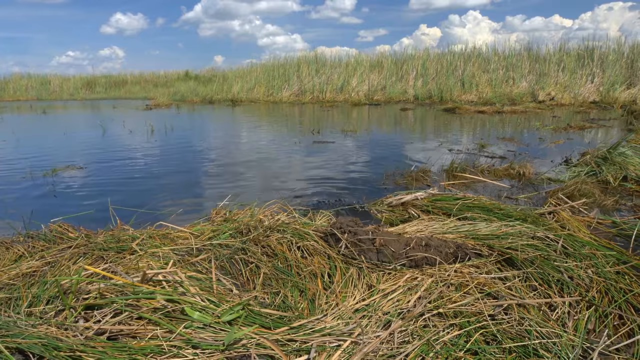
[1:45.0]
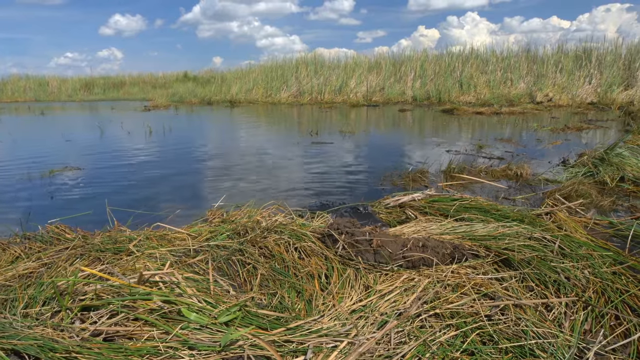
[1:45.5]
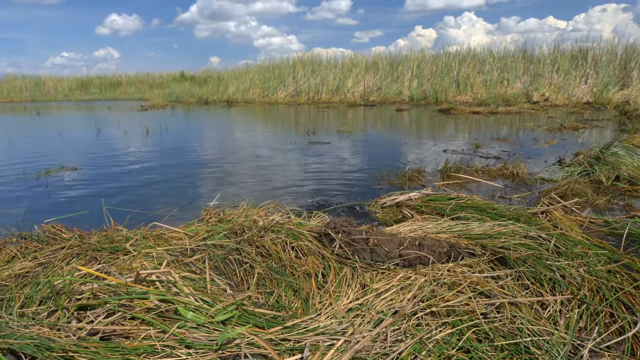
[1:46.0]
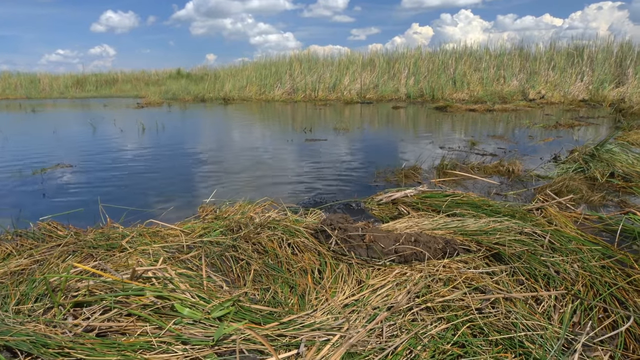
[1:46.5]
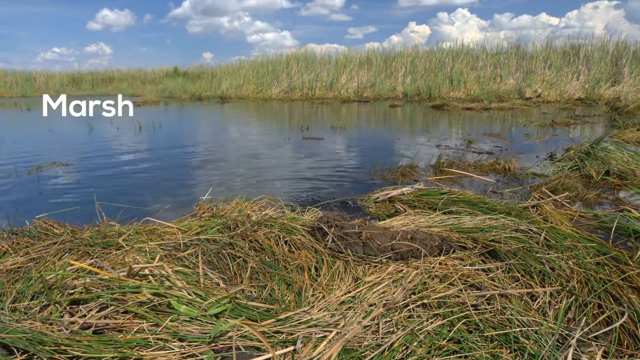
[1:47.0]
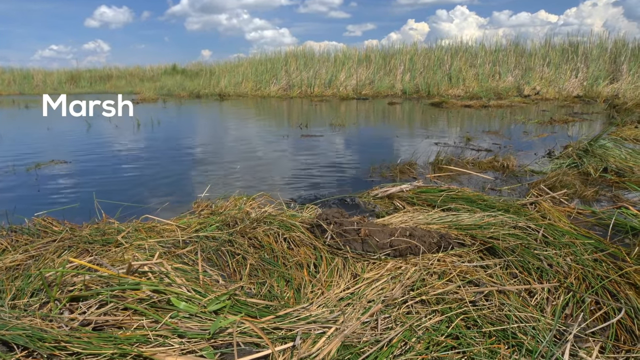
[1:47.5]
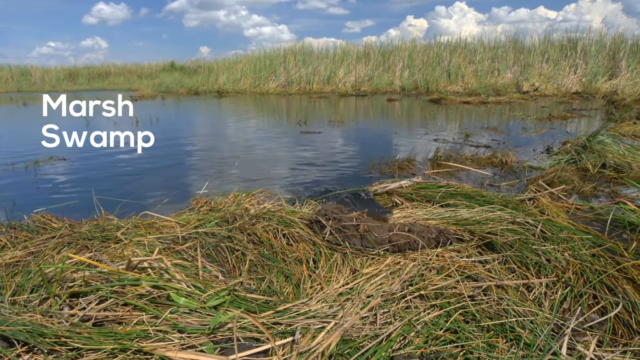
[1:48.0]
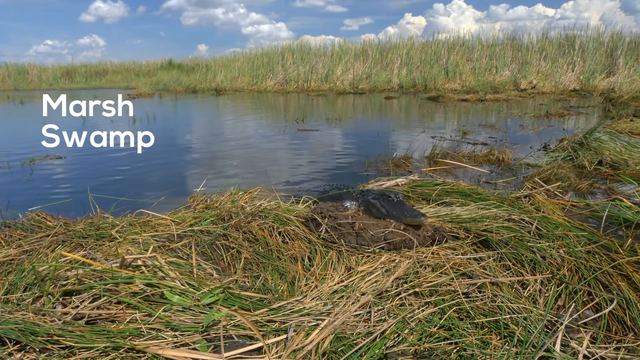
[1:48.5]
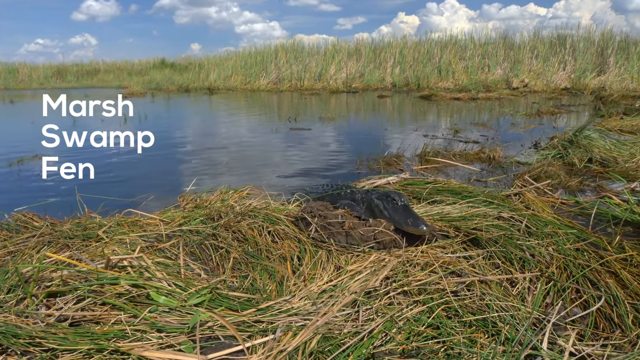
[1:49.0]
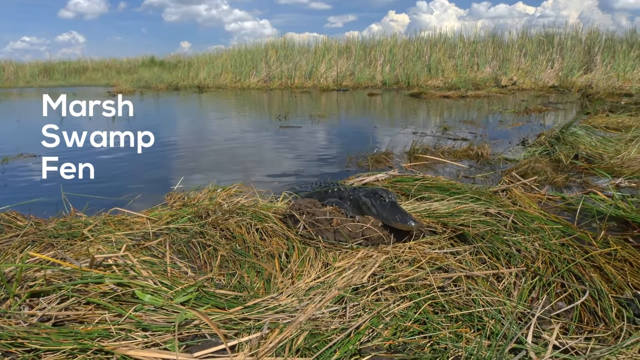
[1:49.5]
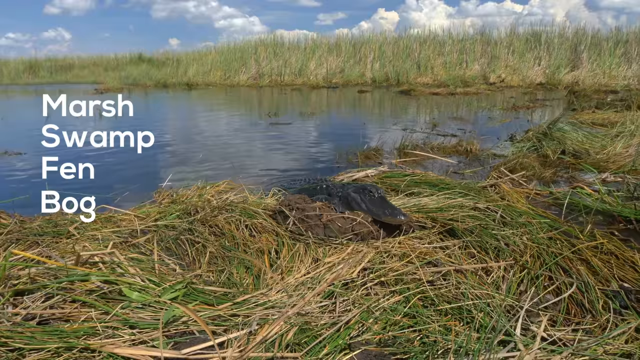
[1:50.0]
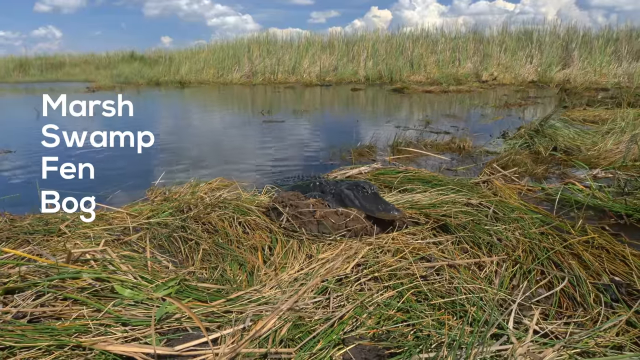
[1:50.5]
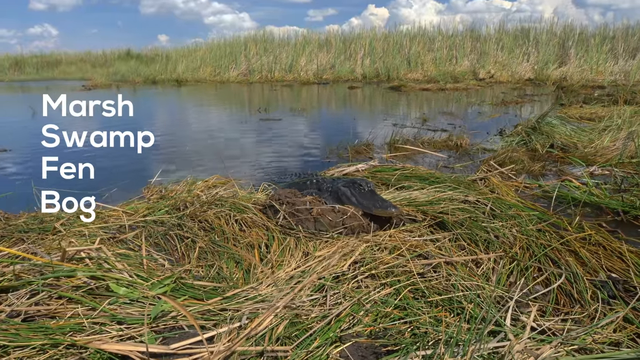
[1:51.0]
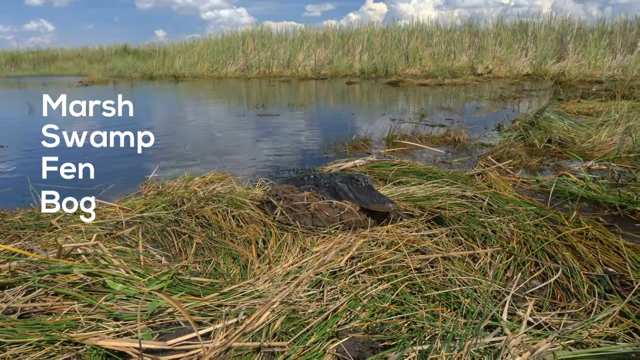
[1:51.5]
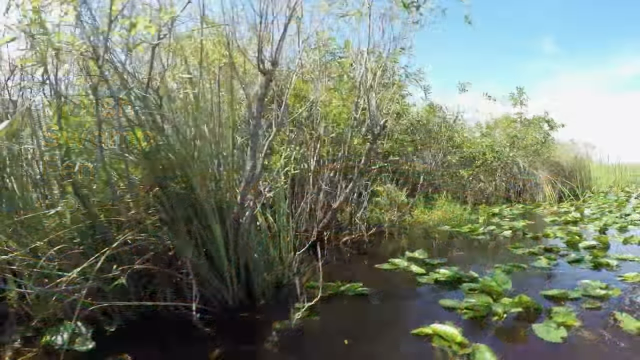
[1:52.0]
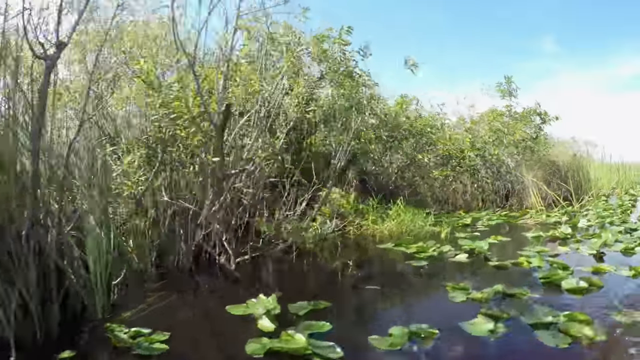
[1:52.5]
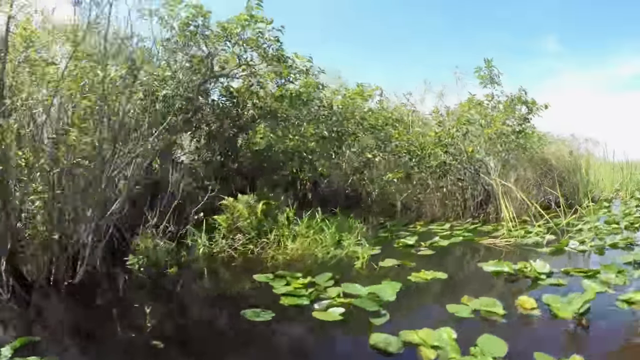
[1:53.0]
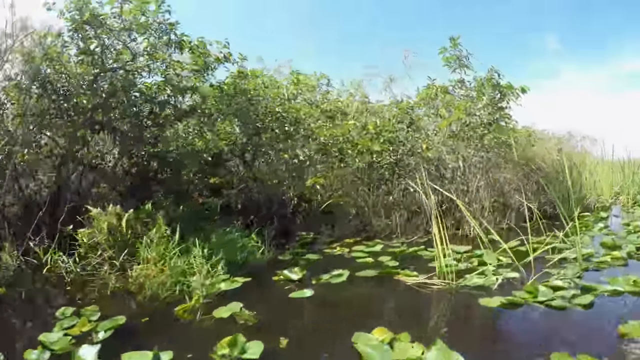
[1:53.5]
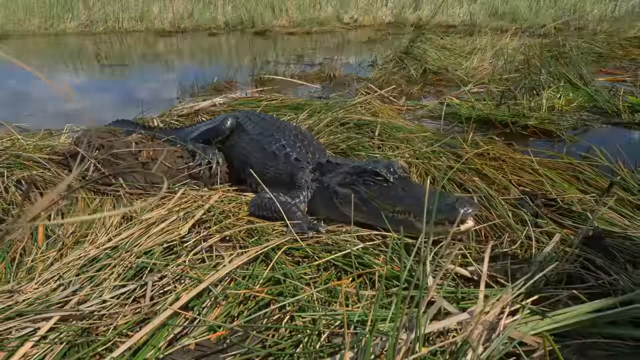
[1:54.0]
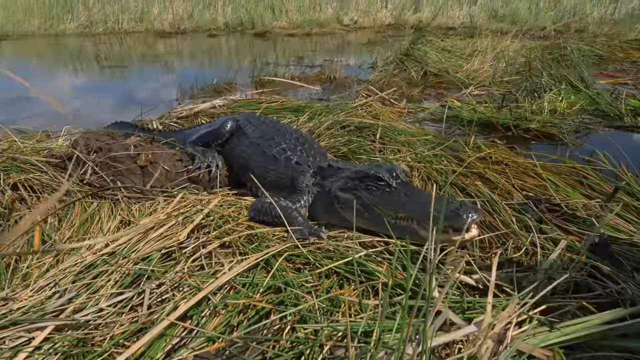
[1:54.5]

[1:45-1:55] What appears to be a marshy area of the marsh, swamp, fen and bog type is shown. A crocodile or alligator crawls out of the water into the long marshy grass in bright sunshine. The sky is very blue with big puffy clouds. Part of the marsh has grasses padded down, probably where the animal often comes to sun itself. Many lily-pad-like plants grow along the shores, and bushy trees grow at the water's edge, with a portion of their leaves missing, maybe eaten by marsh wildlife.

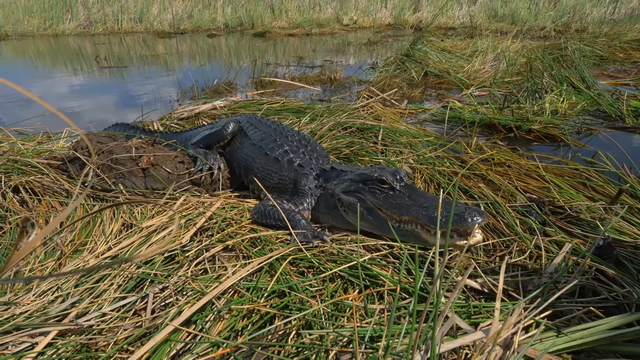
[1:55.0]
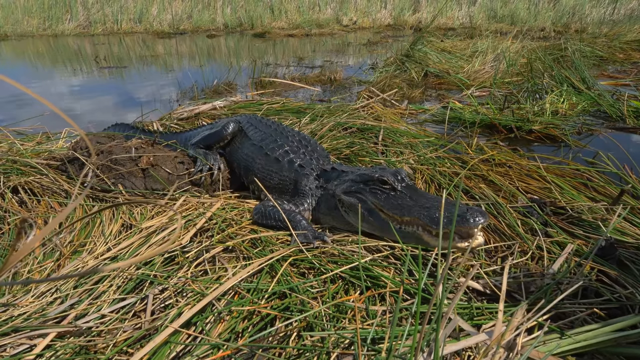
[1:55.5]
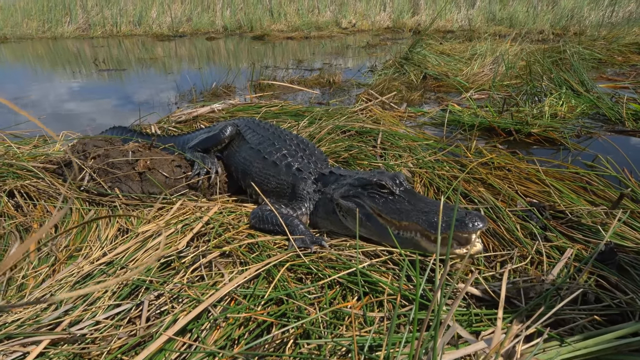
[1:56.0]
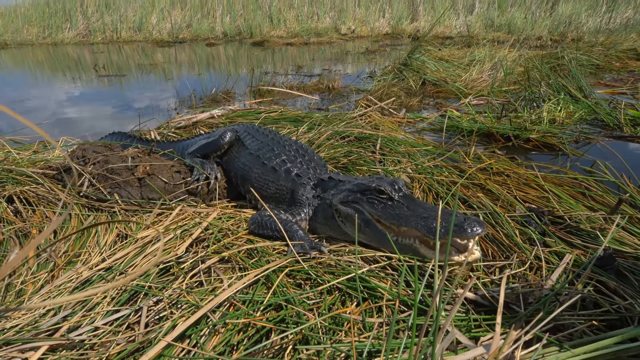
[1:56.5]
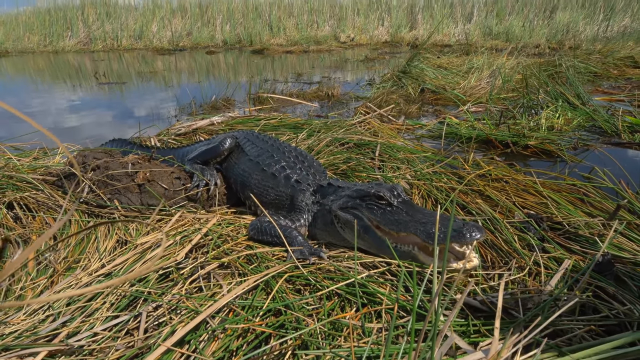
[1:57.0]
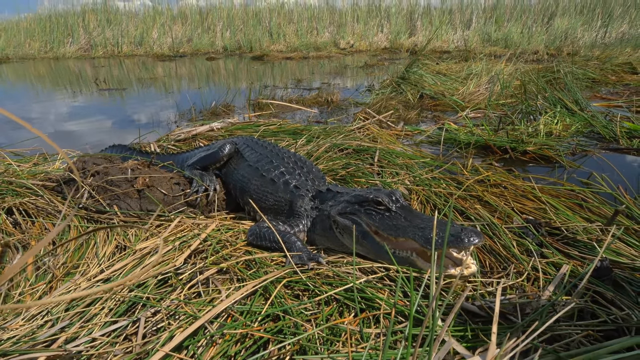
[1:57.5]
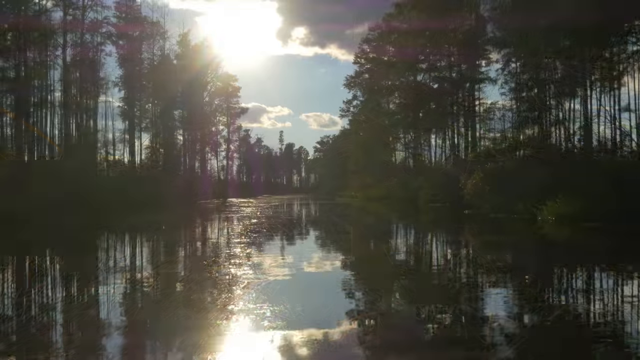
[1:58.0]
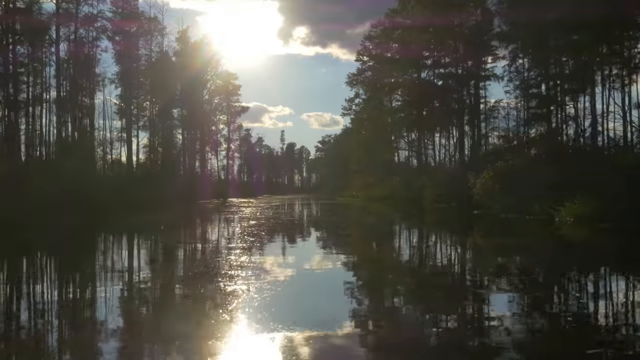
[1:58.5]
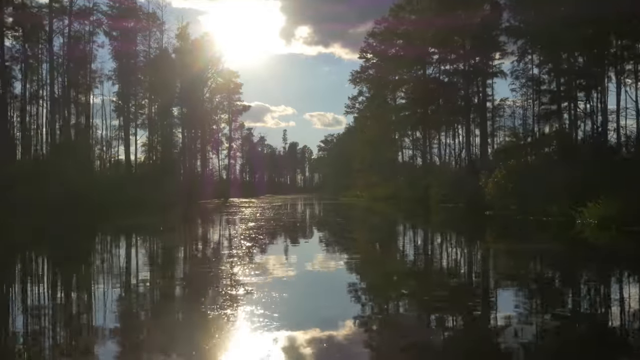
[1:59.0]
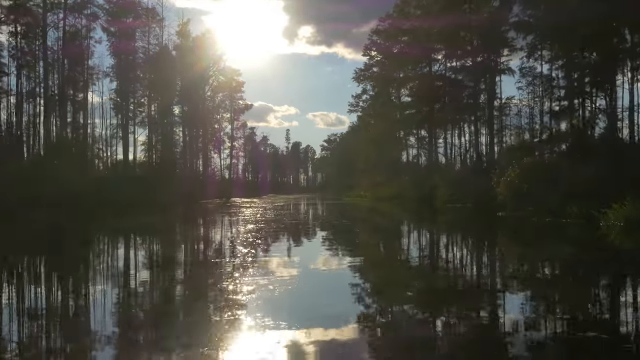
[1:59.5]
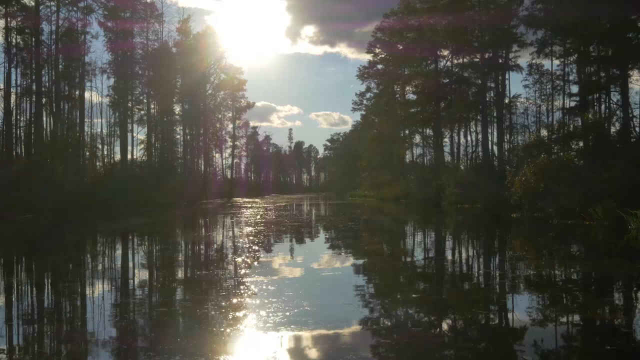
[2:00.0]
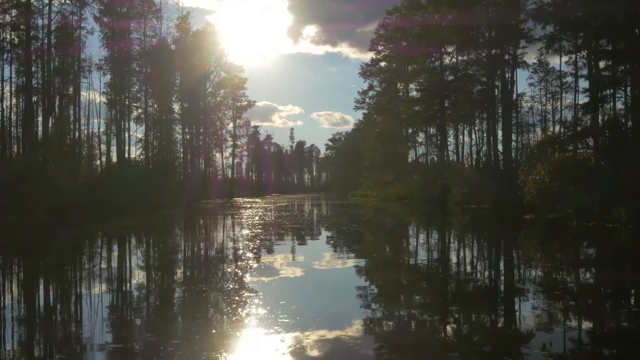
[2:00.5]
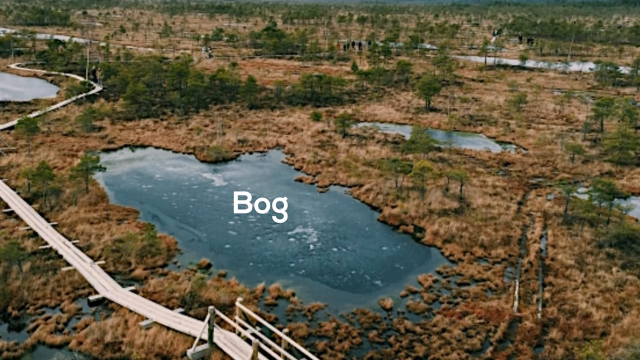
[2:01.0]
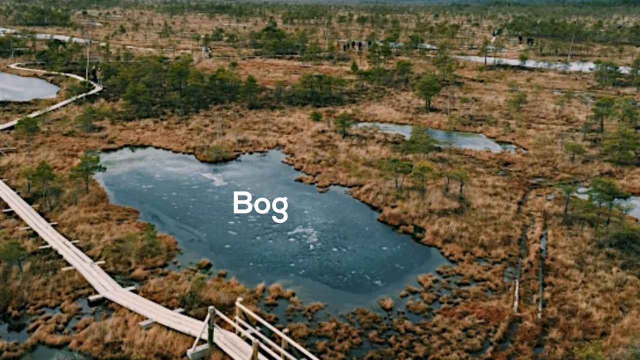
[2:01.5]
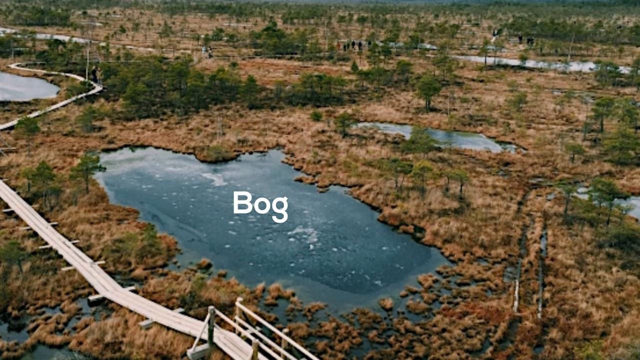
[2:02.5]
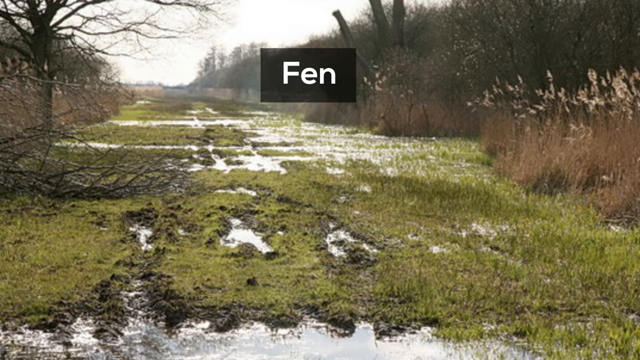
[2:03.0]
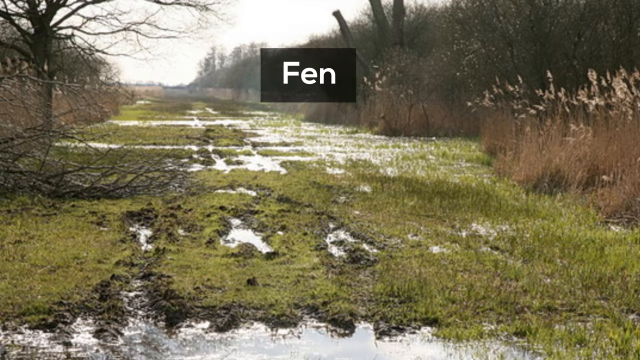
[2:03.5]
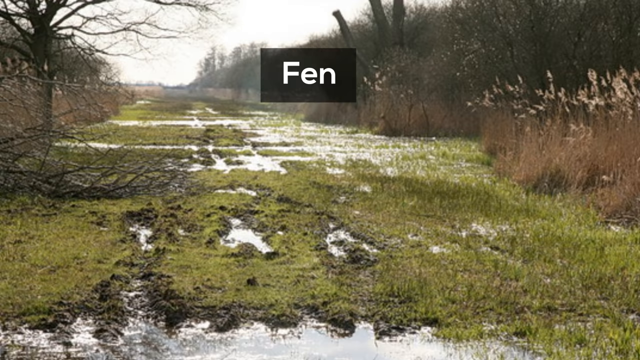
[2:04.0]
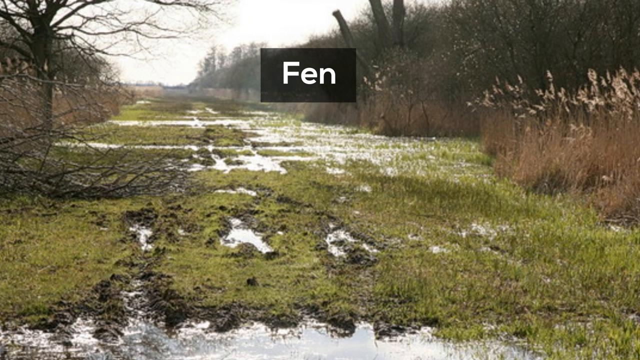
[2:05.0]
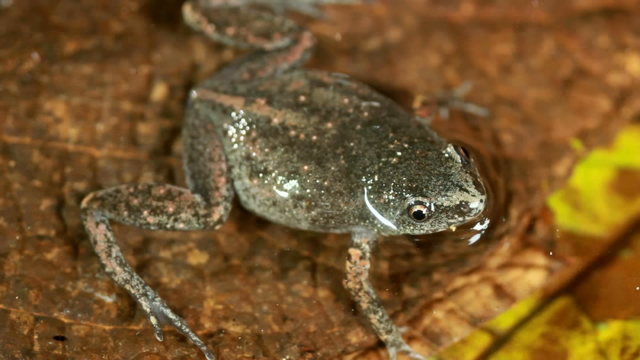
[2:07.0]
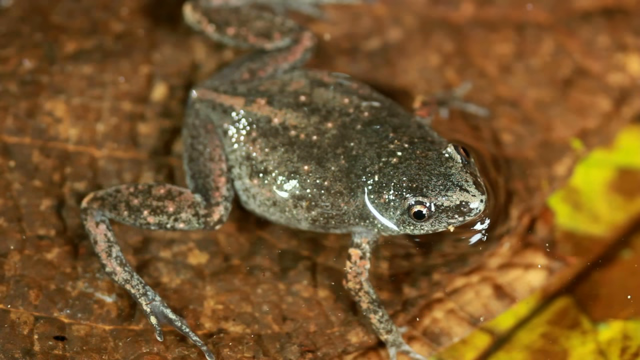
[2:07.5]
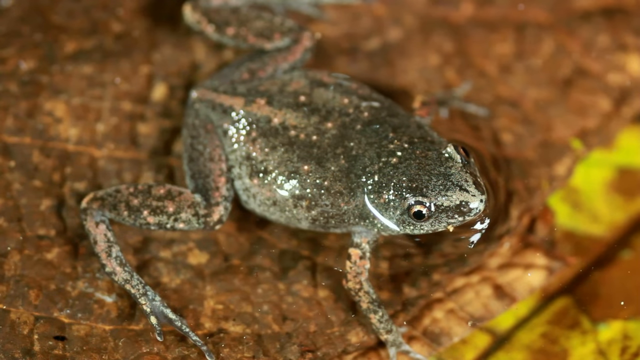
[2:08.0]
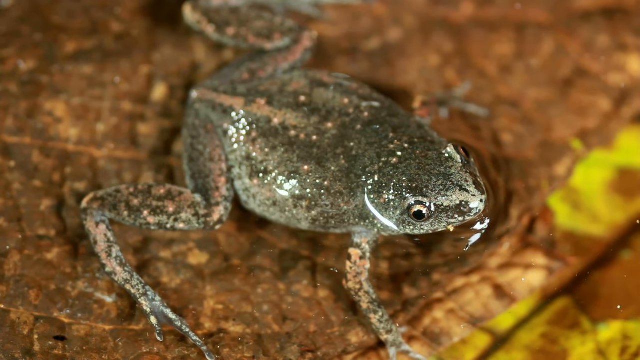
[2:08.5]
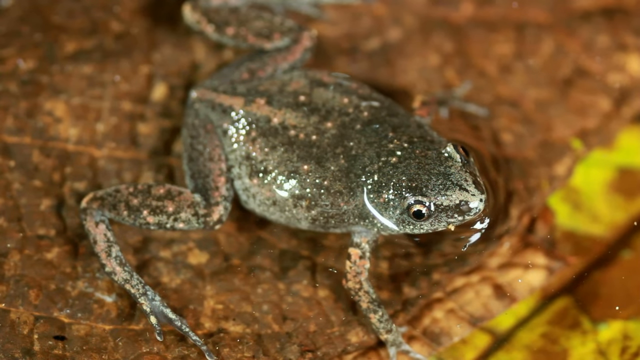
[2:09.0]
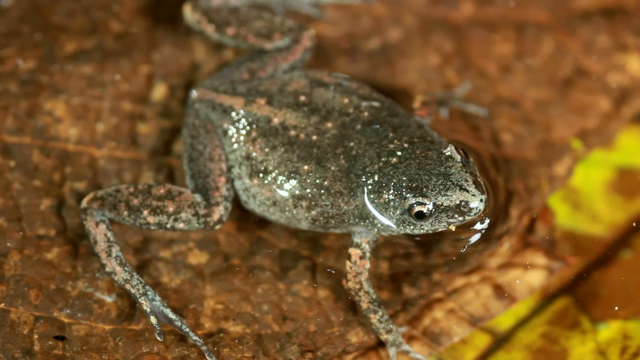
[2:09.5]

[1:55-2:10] The alligator or crocodile suns itself with its mouth opening. Marshy vegetation grows on the water, along with amphibious animals such as frogs. Lush vegetation lines the sides, with very tall swamp grasses. The area where the animal suns itself seems kind of padded down, the marsh grasses laying over, possibly because it suns there often. An aerial view shows the bog, which does not look very big and is kind of oval. The bright sun comes through big, puffy white clouds in a bright blue sky. A frog rests, its breathing movement visible. A big, long walkway leads to the water through the marsh grass.